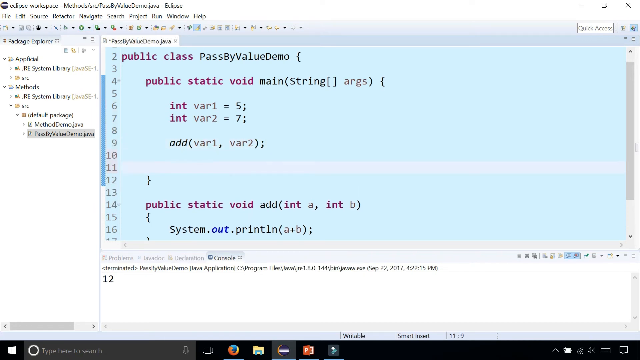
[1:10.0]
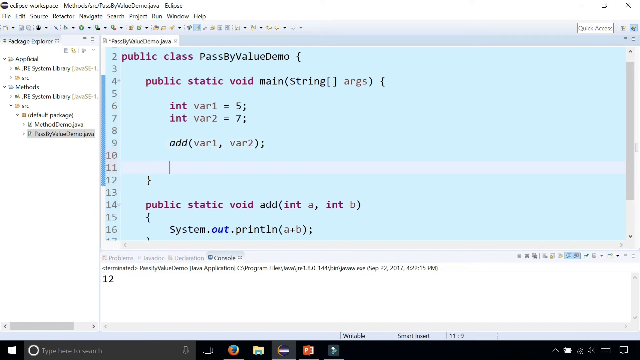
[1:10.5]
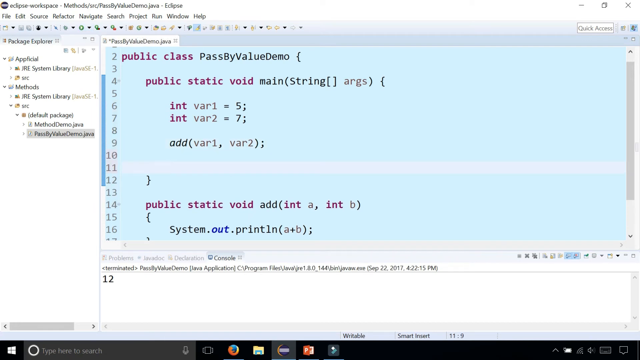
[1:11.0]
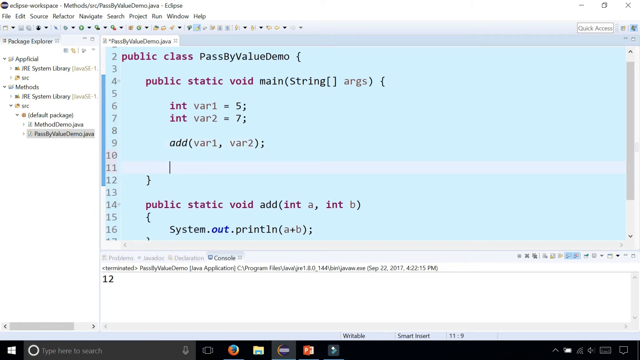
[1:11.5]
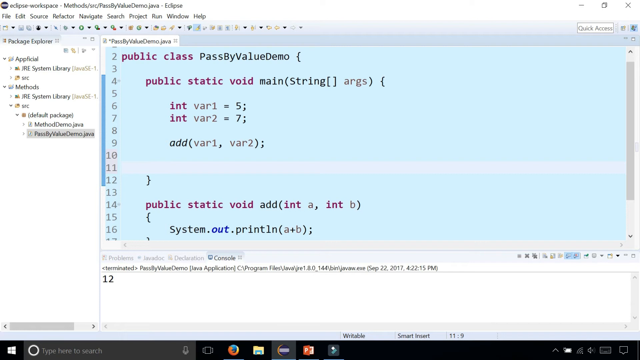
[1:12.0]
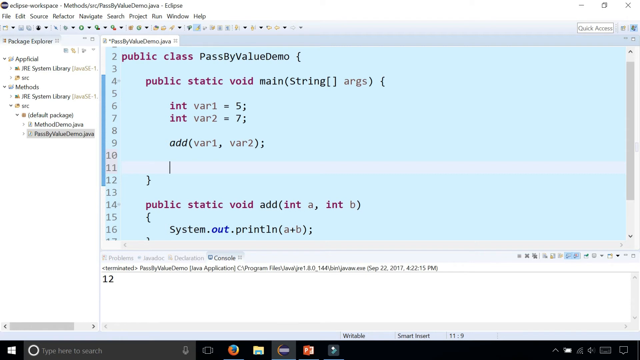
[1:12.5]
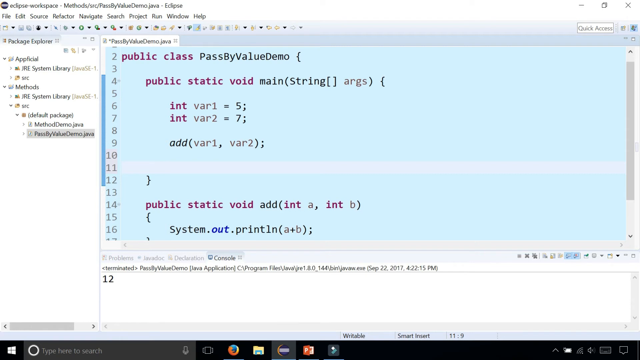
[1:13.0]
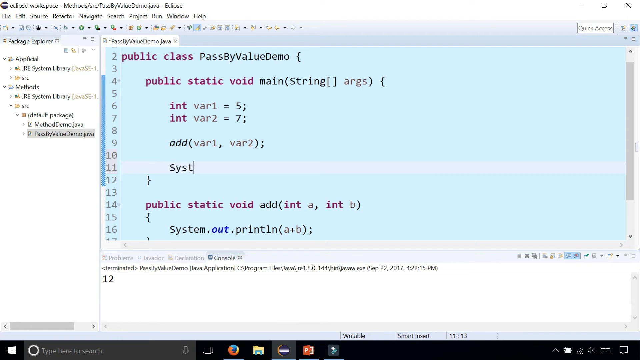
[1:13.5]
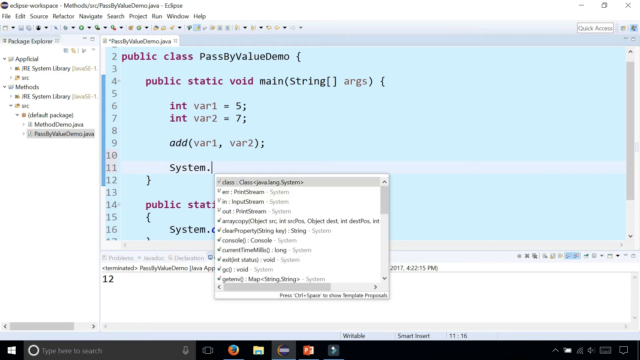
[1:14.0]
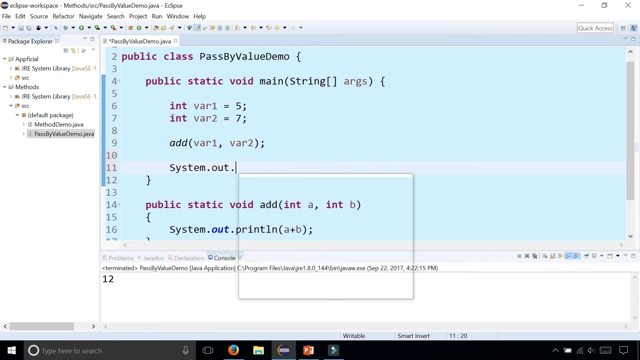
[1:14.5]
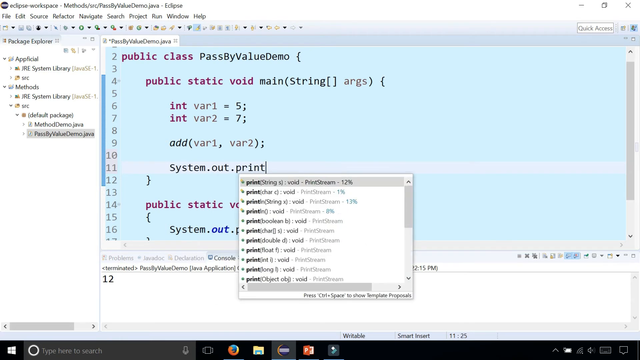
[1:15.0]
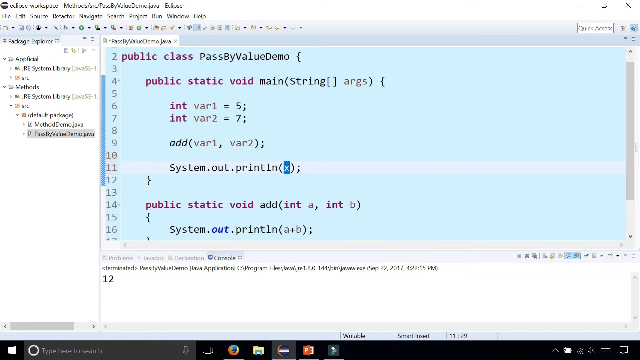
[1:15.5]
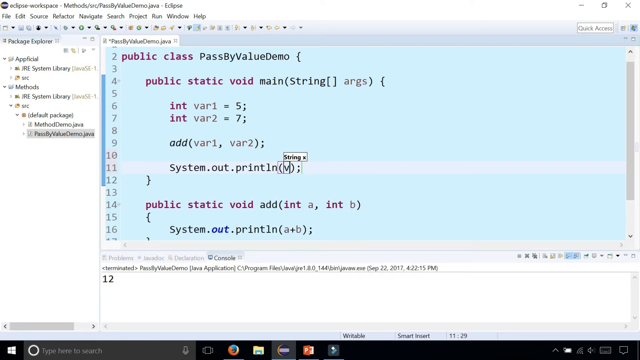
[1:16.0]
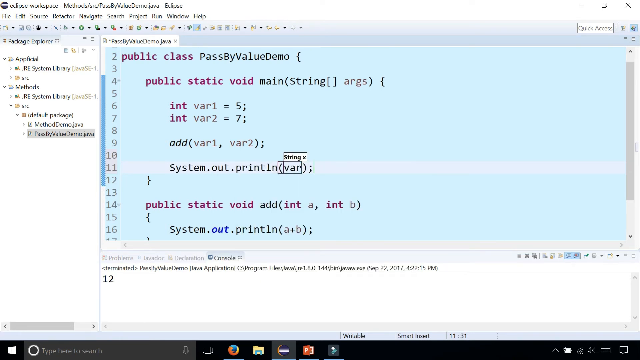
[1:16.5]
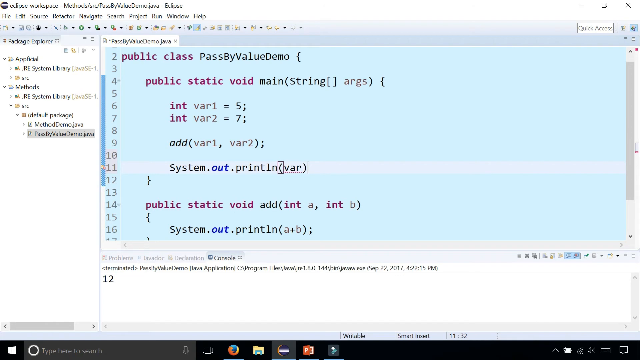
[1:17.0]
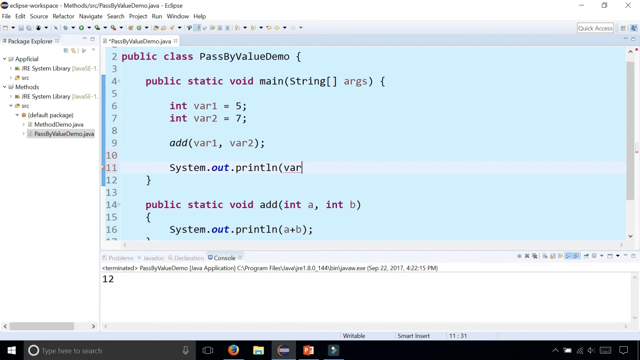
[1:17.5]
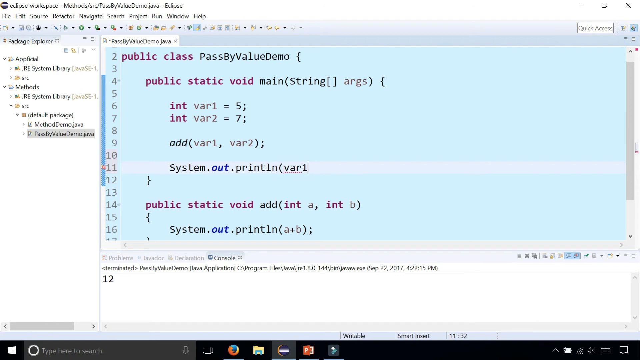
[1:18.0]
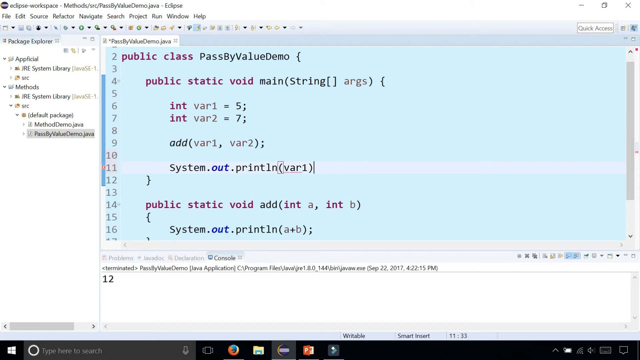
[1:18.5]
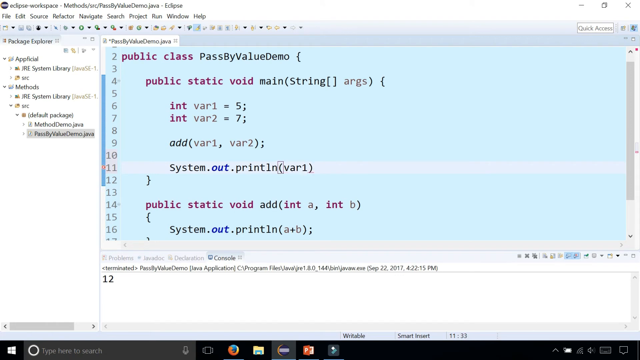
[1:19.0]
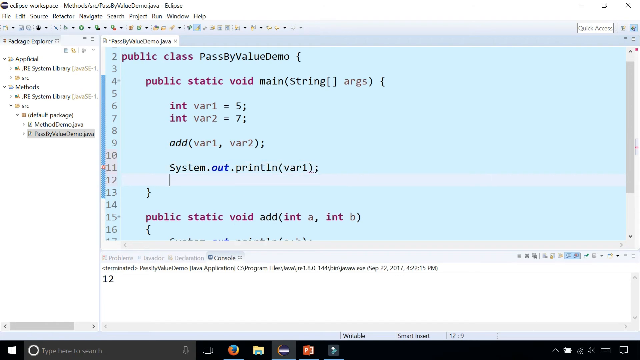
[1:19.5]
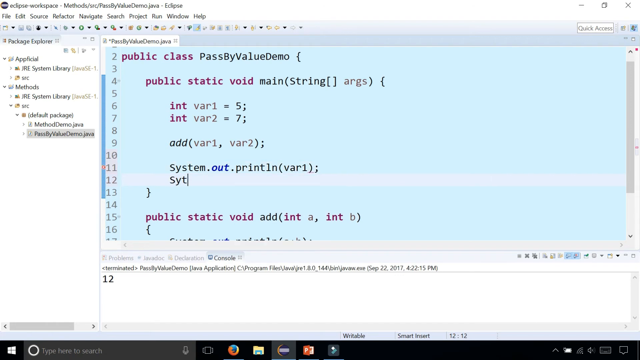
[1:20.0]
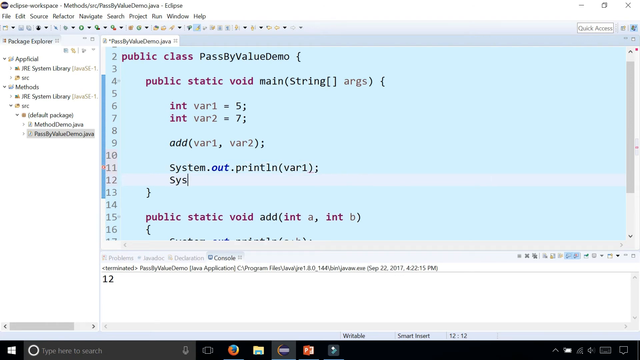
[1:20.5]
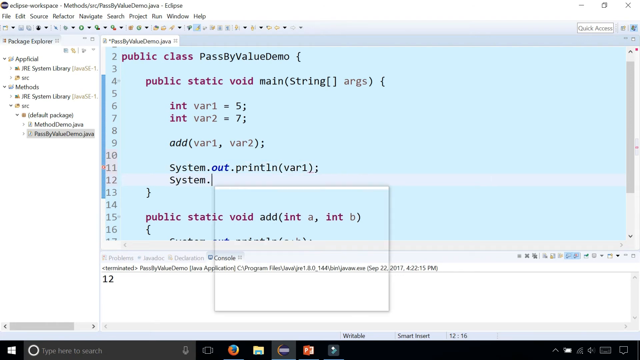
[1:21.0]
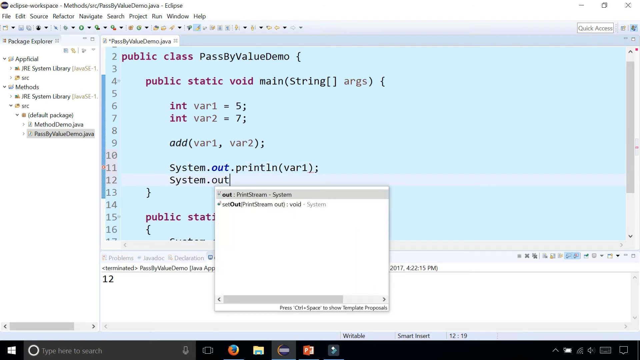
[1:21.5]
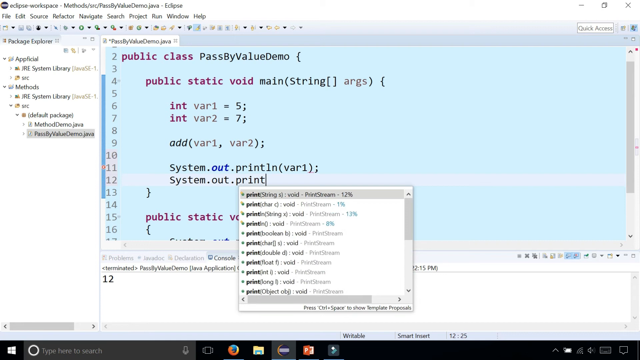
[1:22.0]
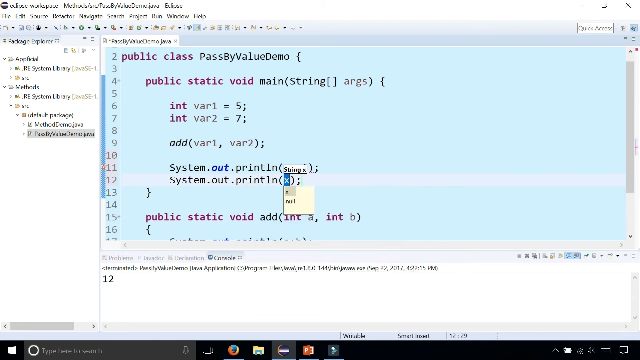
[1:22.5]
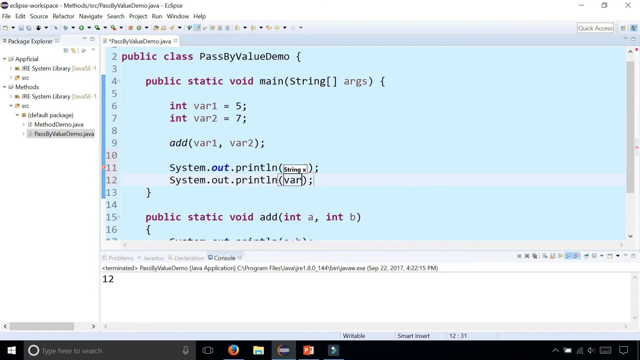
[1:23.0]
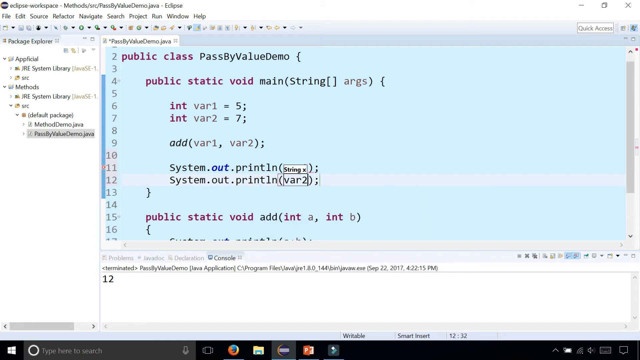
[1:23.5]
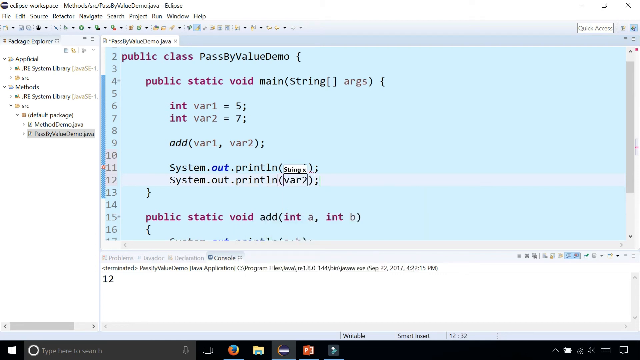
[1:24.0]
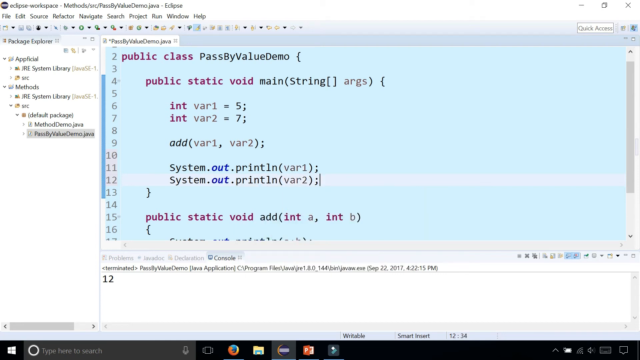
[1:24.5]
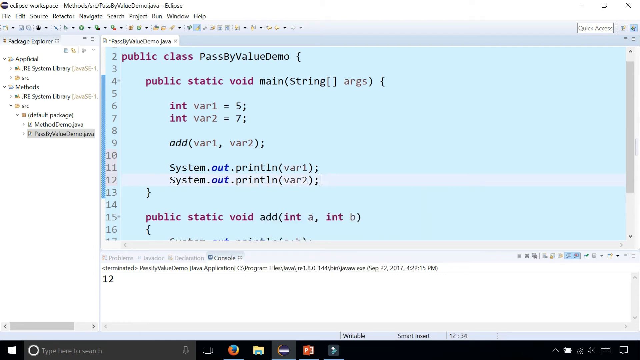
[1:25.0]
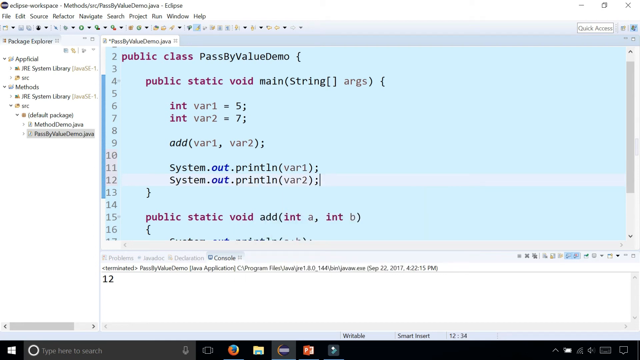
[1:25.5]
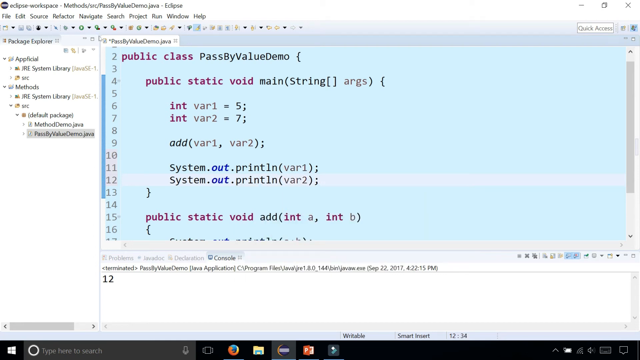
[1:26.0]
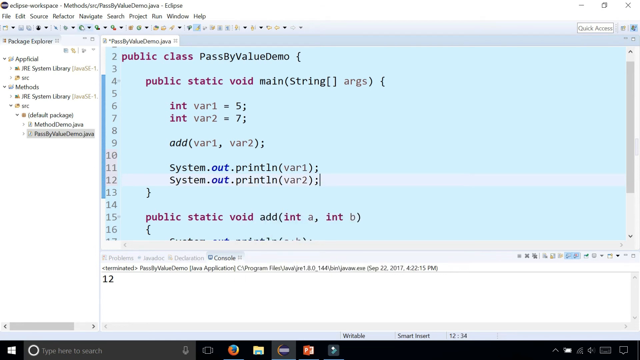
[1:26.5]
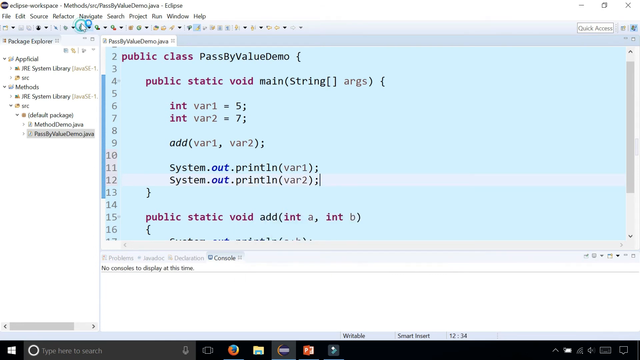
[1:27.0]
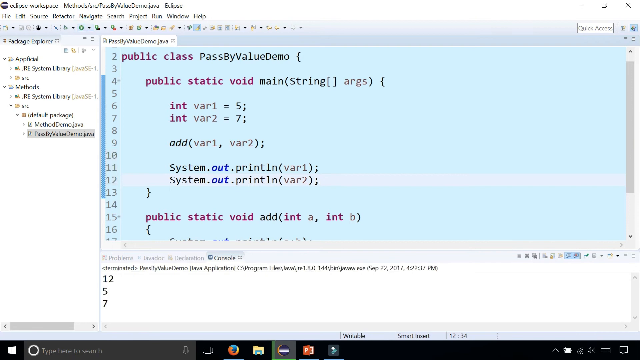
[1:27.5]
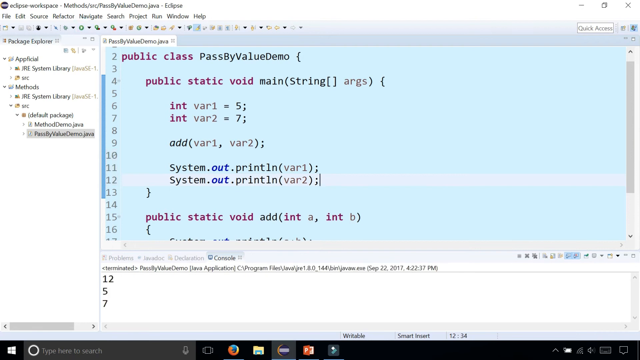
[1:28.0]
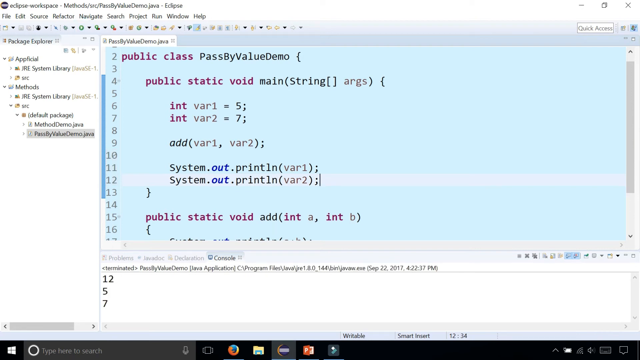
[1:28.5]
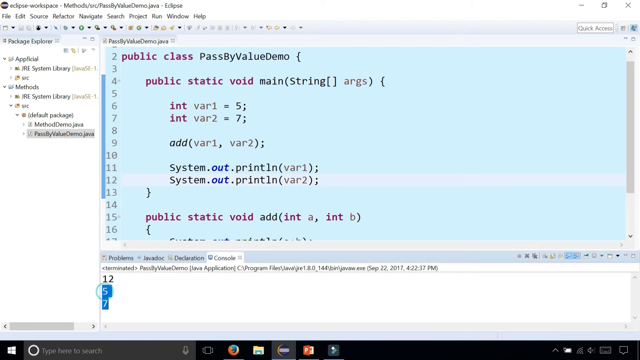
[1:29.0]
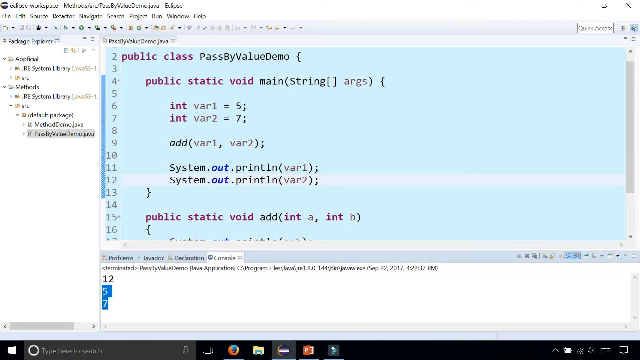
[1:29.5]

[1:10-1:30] The screen of the computer program Eclipse Workplace shows some sort of Java work. The typical menu across the top reads File, Edit, Source, Refactor, Navigate, Search, Project, Run, Window, Help, and a menu tree along the left begins with Package Explorer and lists items including JRE System Library, Default Package and PassByValueDemo.java. Someone types into a green screen in the middle, which is numbered vertically on the left from 1 down to 17; as they add data, the numbers on the left change and grow, as though a line is added each time. They type System.out.println(var1); and System.out.println(var2);. Data then appears at the bottom of the screen under the console tab, reading "terminated" along with a series of instructions, and the numbers 12, 5 and 7 appear. The screen scrolls.